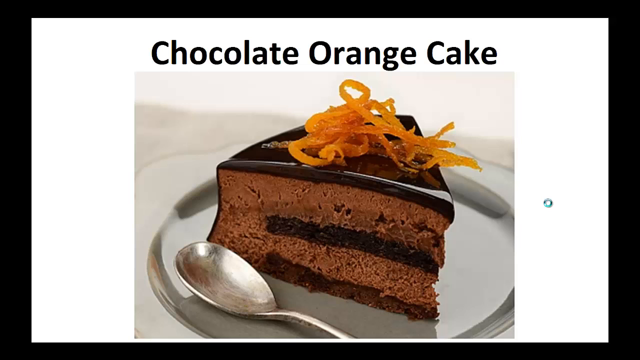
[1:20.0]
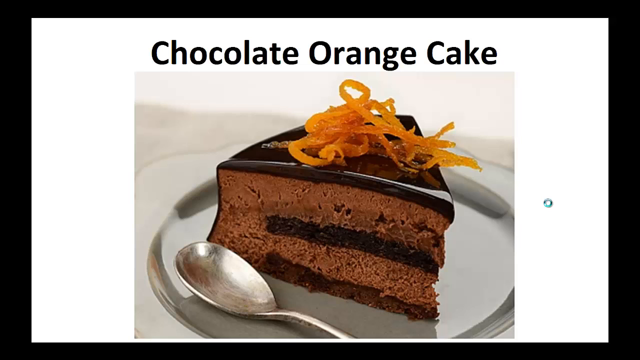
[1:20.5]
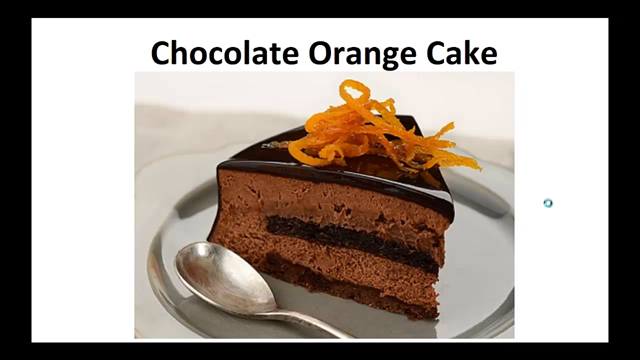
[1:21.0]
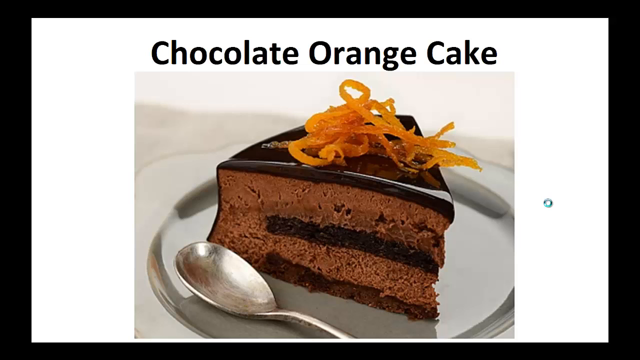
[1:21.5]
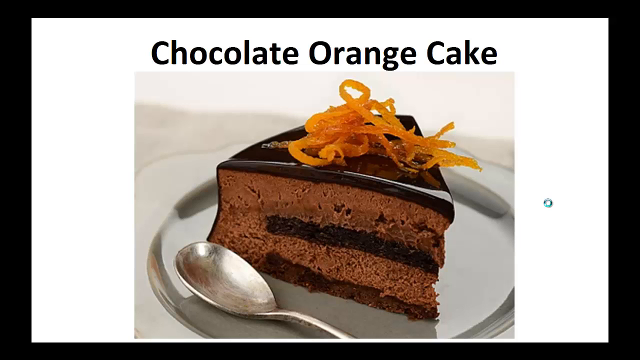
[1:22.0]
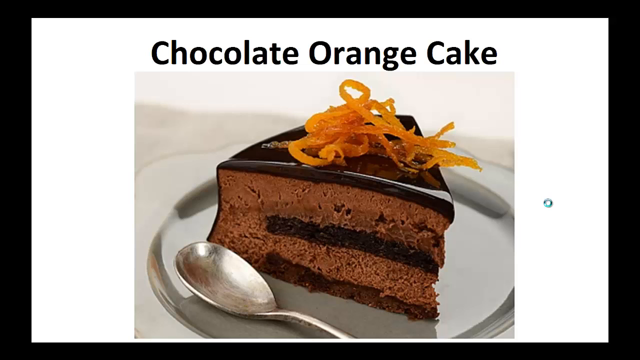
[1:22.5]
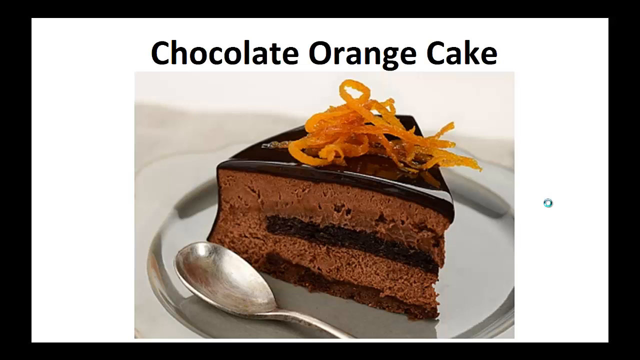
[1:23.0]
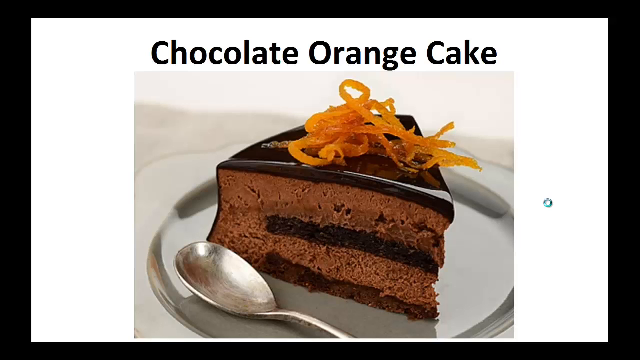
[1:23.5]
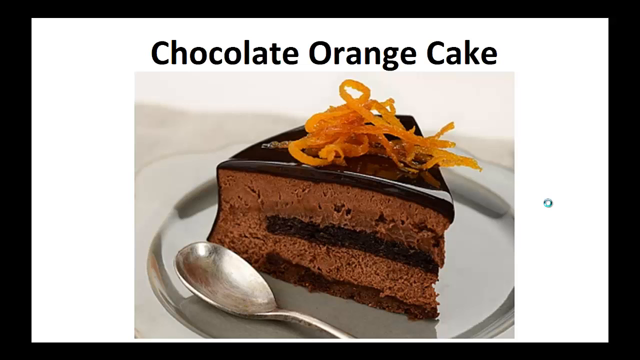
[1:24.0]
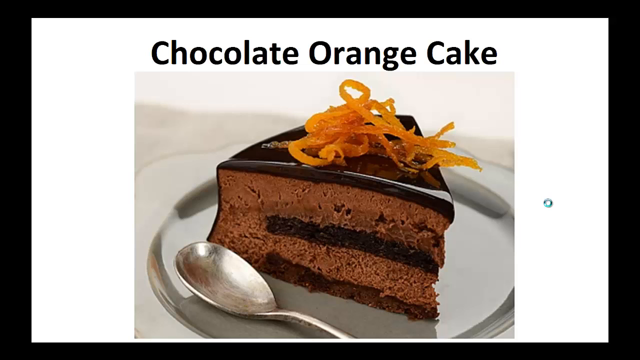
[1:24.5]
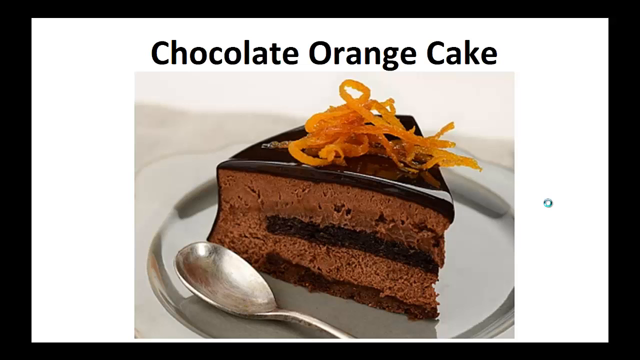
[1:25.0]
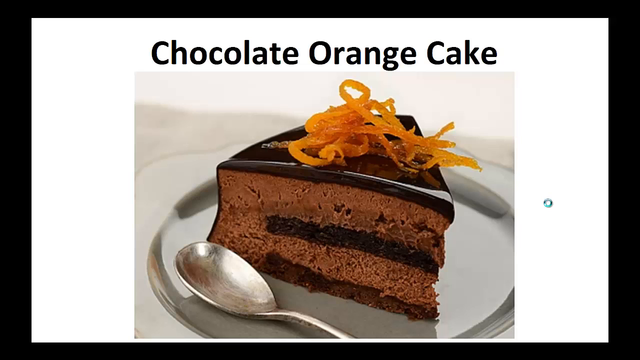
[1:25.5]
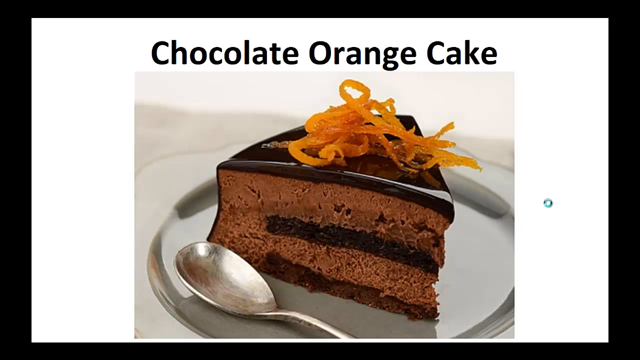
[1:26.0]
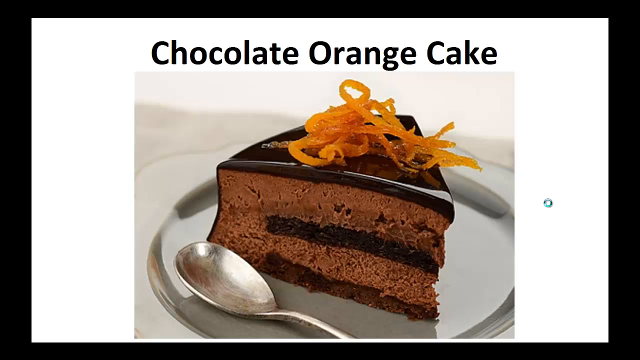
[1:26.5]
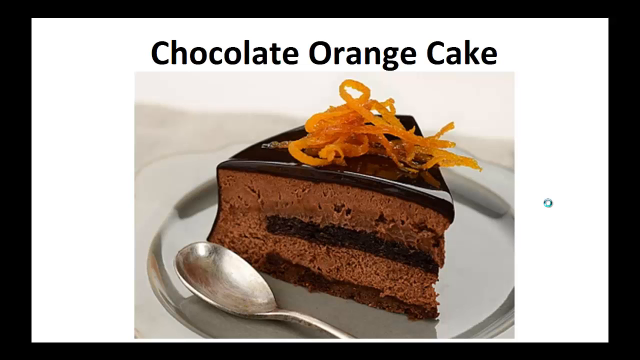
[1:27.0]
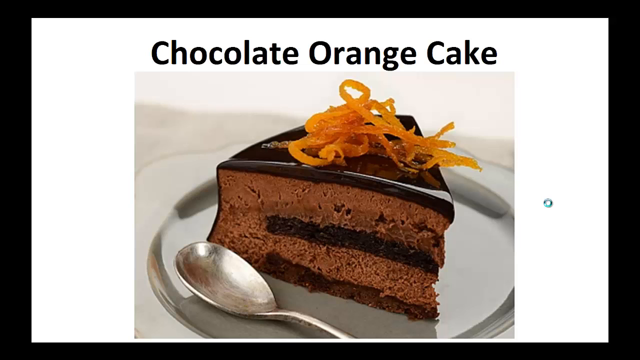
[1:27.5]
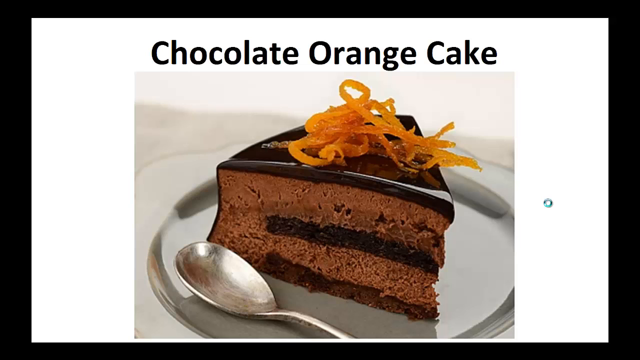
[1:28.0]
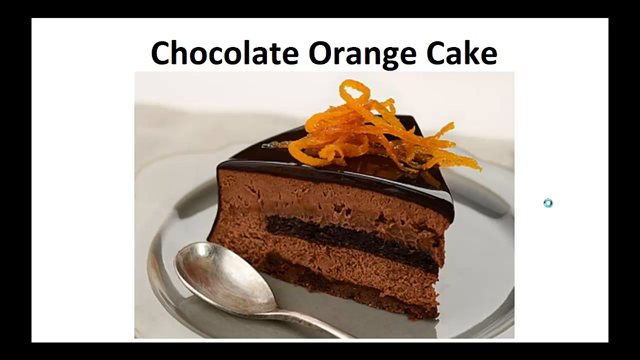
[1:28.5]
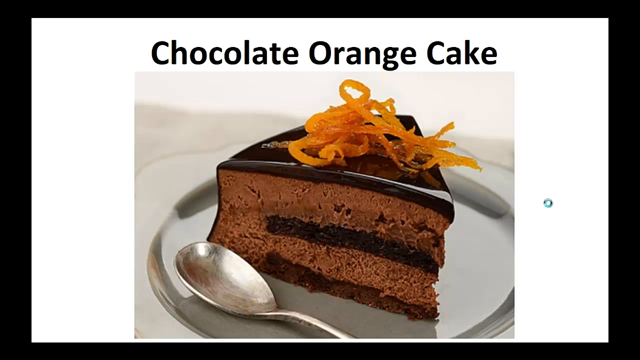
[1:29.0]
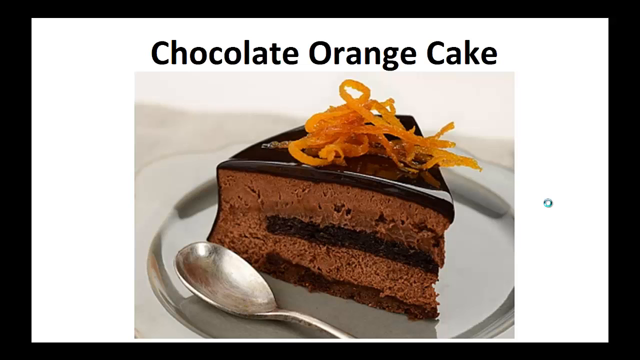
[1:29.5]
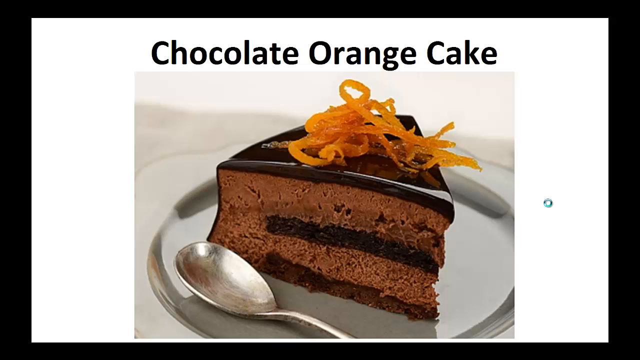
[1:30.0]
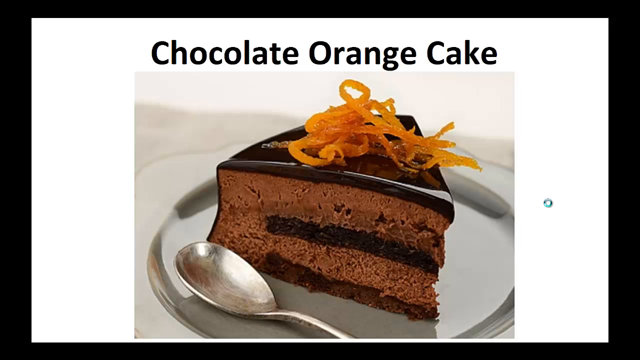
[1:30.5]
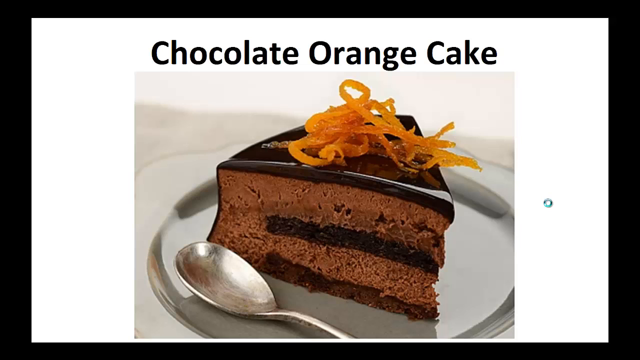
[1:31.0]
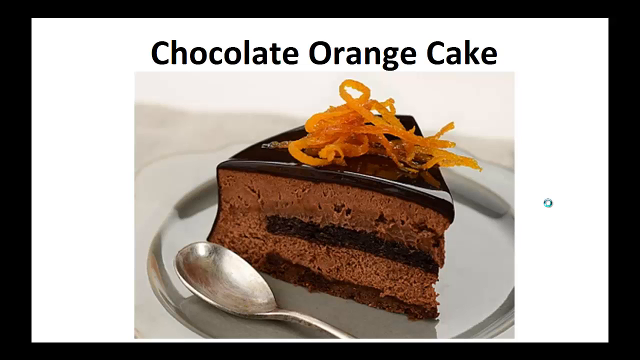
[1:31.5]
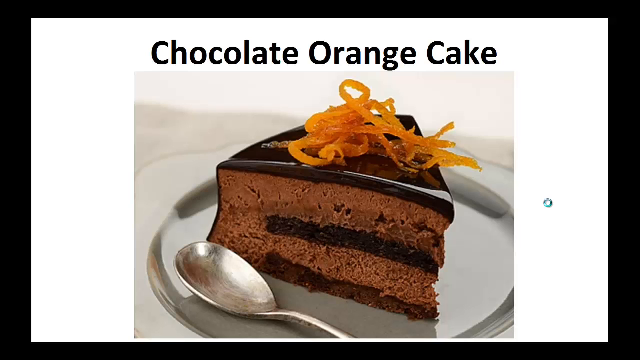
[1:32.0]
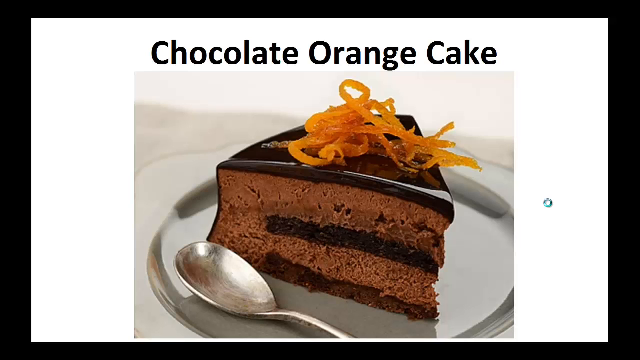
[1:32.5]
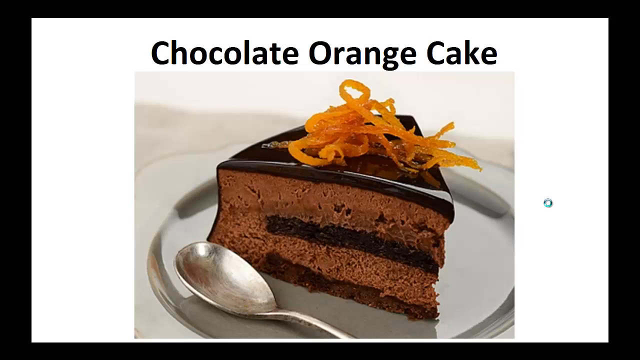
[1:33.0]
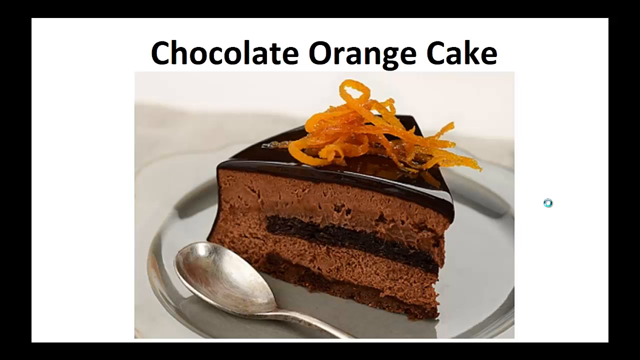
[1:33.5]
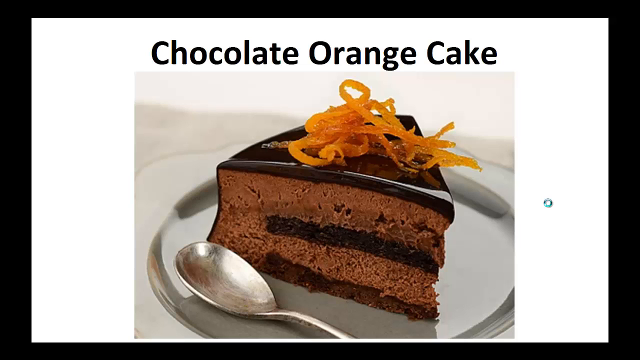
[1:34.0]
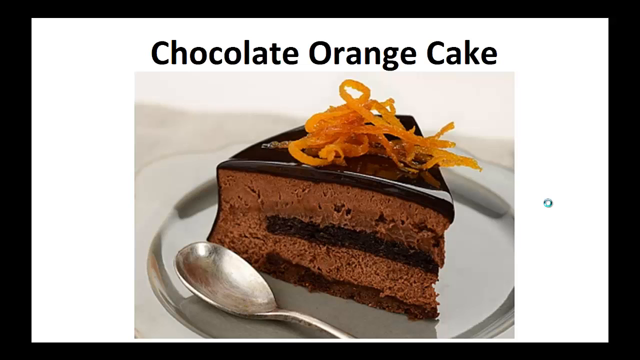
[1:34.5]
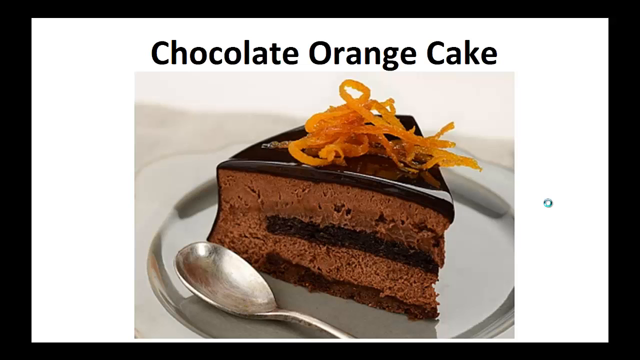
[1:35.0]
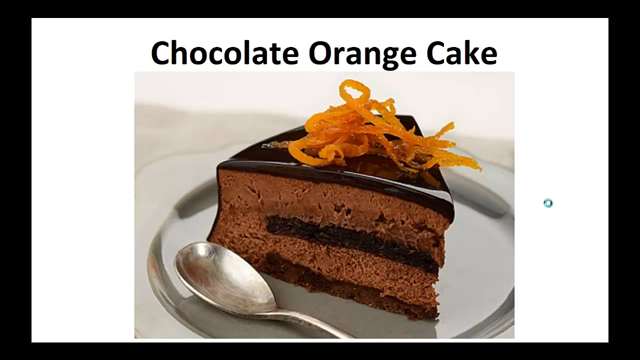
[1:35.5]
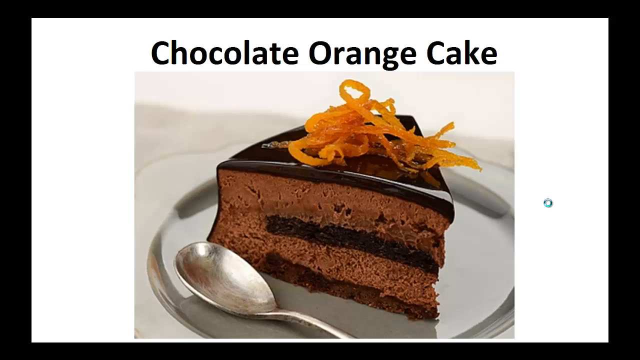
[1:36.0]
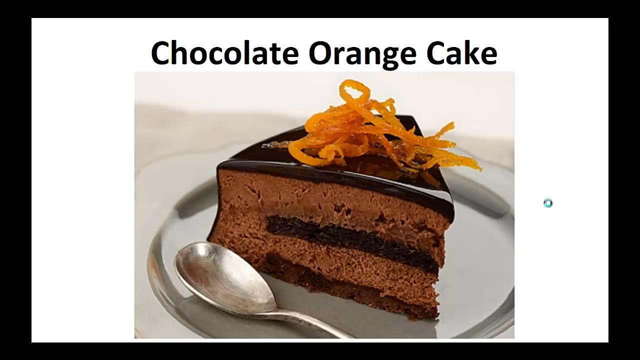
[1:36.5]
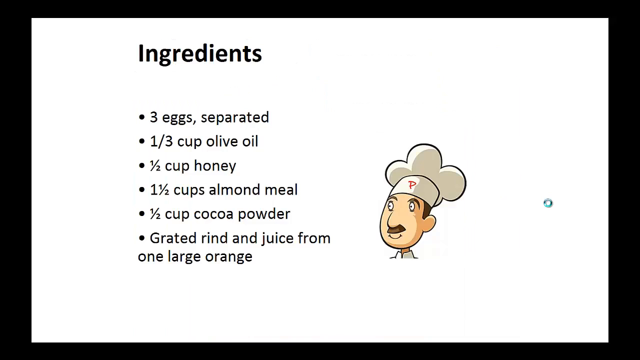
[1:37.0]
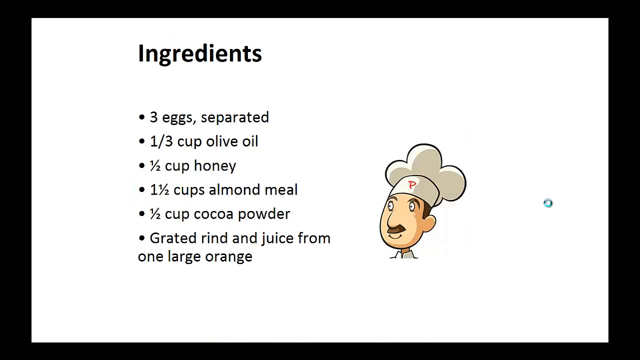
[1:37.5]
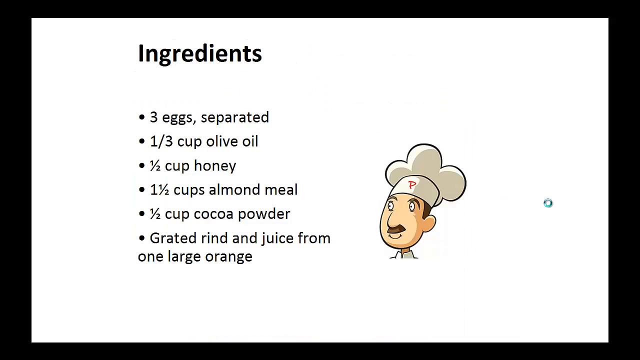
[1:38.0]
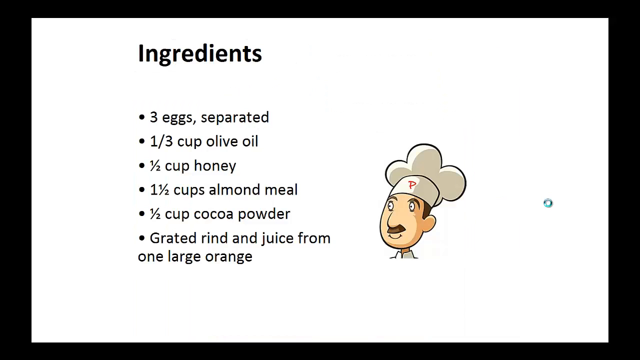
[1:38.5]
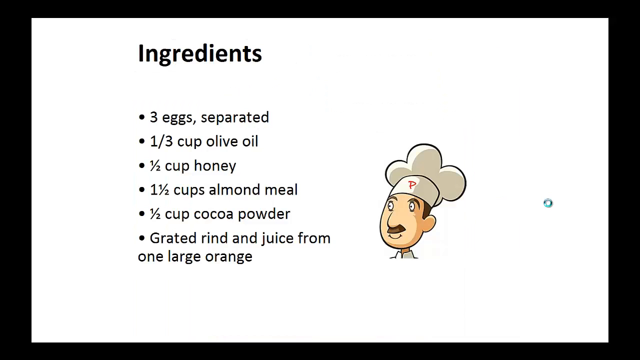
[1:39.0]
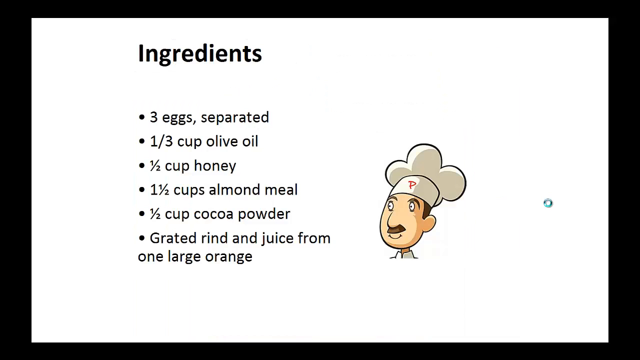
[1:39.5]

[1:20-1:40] Below the top layers of candied orange peel and chocolate ganache, the cake itself looks textured, more like a mousse than a cake, and looks soft and gooey. Within the cake is a layer of chocolate ganache icing, and the ganache also surrounds the cake at the top, the side and the bottom. The cake continues down to the plate, and at the bottom of the cake there is chocolate ganache rather than the gooey chocolate orange mix. There is slightly more cake than icing, but probably only just.